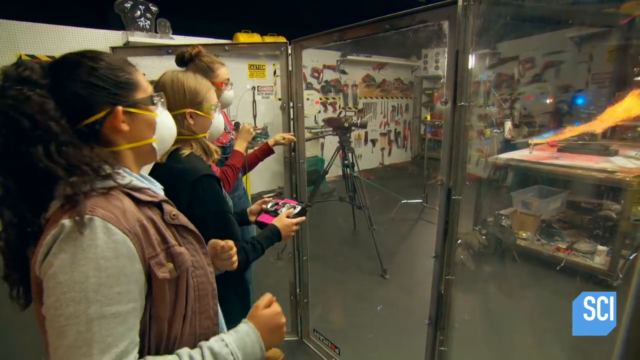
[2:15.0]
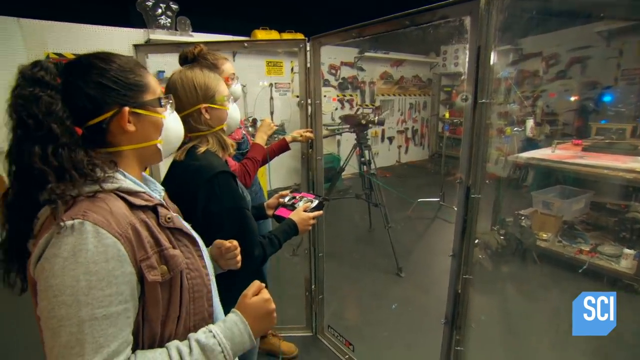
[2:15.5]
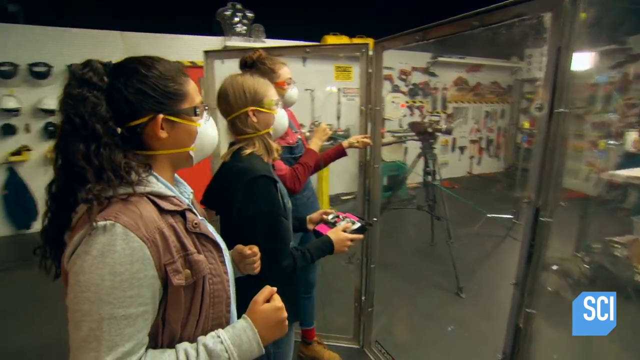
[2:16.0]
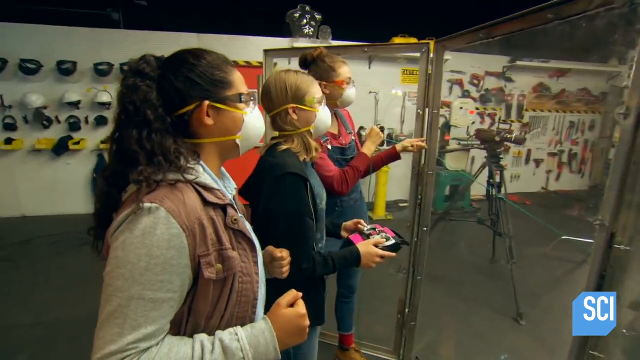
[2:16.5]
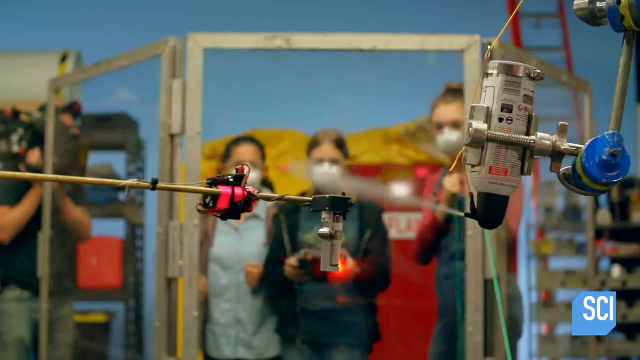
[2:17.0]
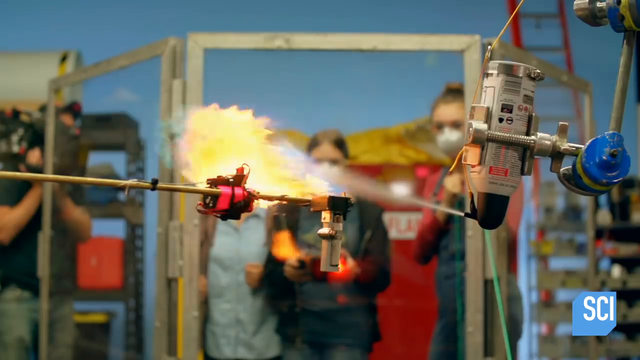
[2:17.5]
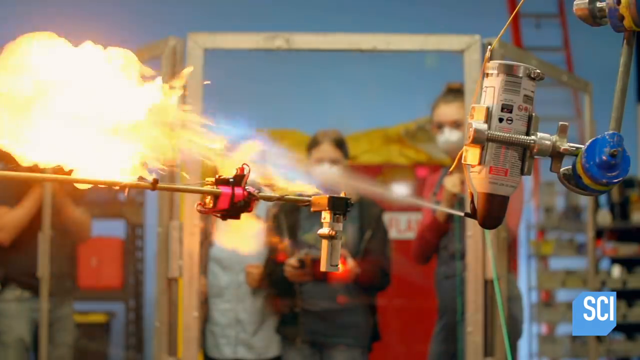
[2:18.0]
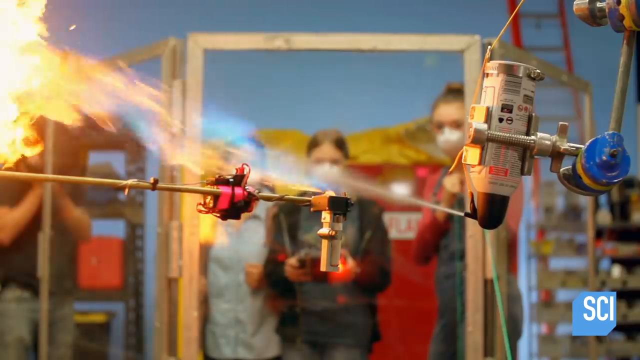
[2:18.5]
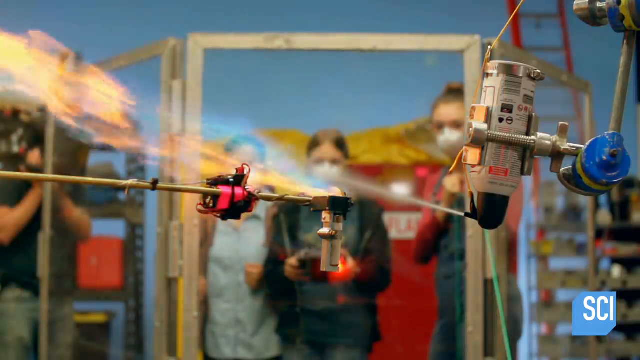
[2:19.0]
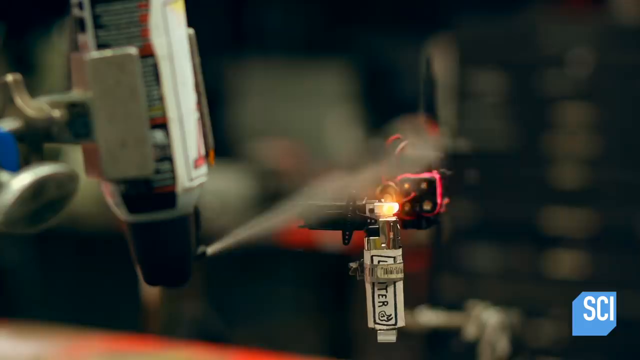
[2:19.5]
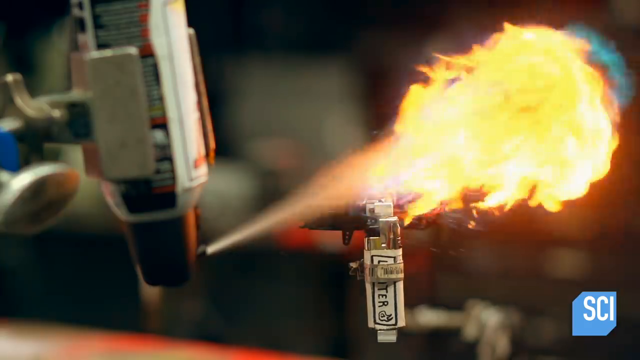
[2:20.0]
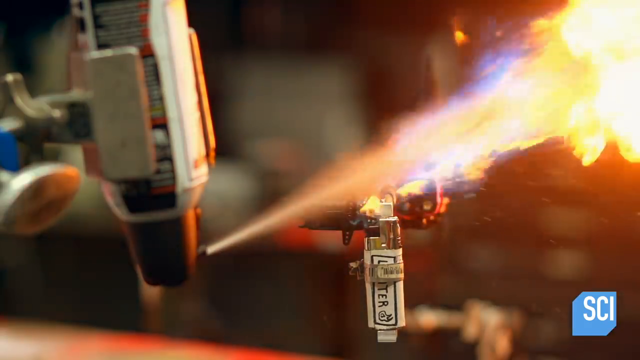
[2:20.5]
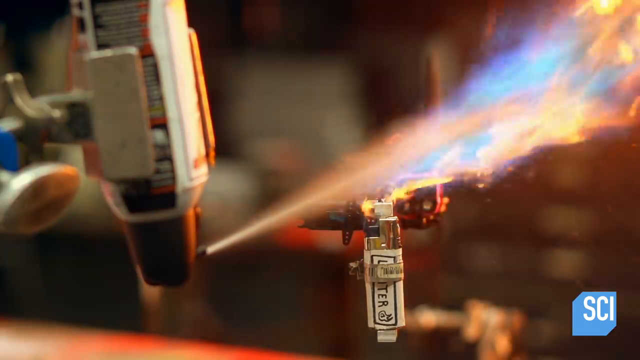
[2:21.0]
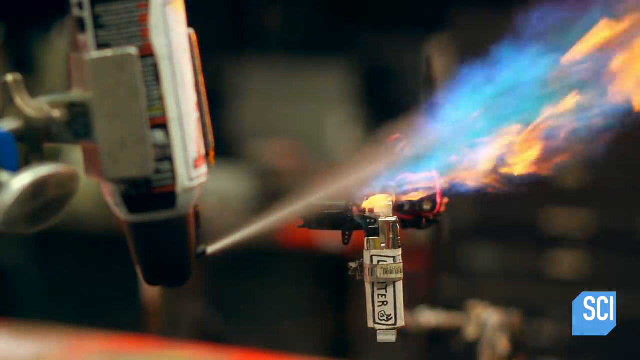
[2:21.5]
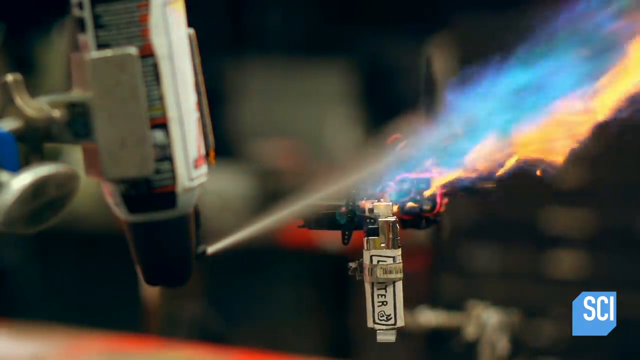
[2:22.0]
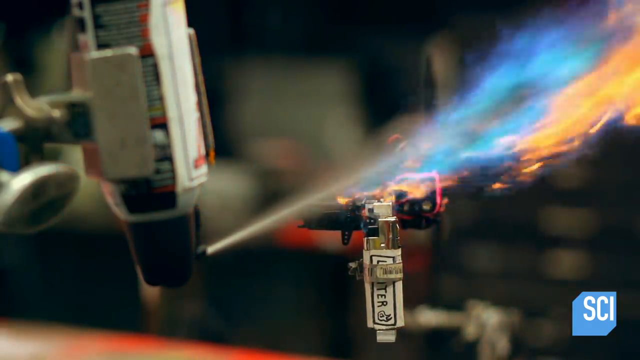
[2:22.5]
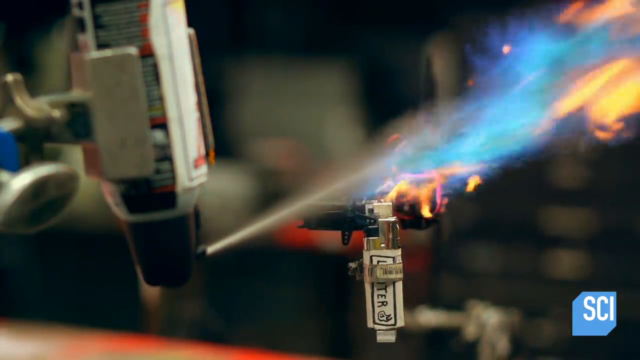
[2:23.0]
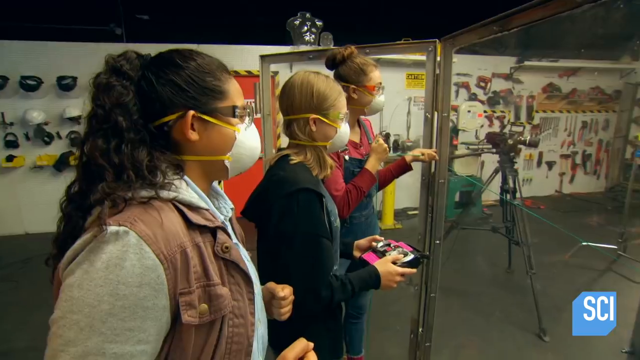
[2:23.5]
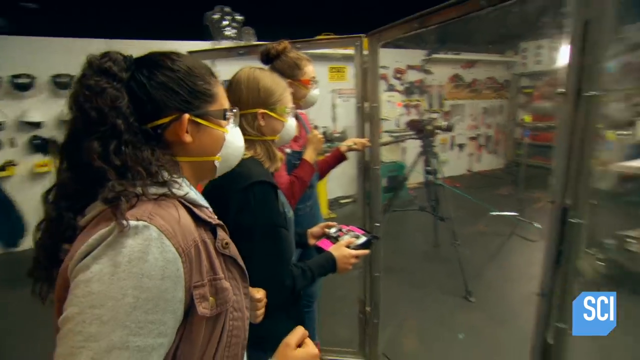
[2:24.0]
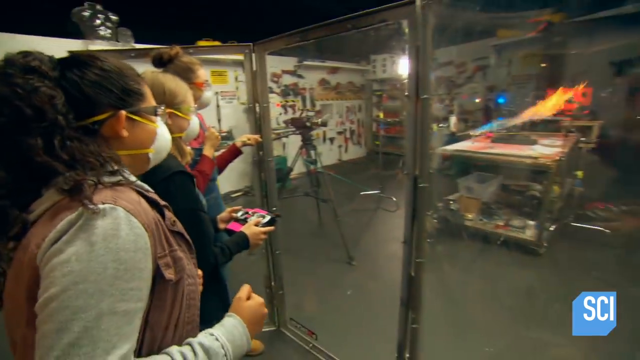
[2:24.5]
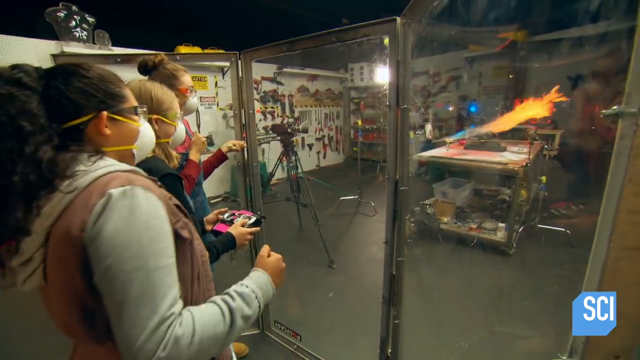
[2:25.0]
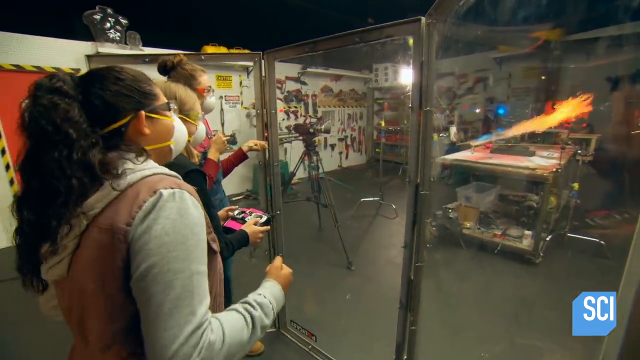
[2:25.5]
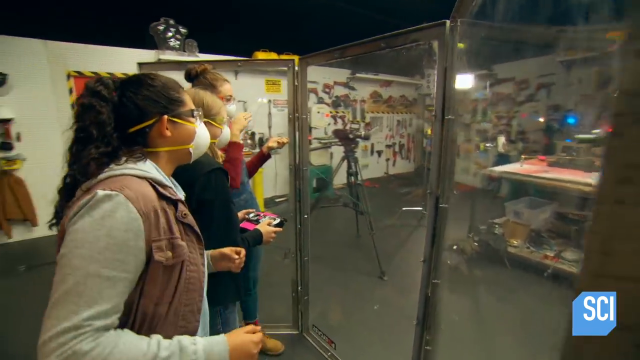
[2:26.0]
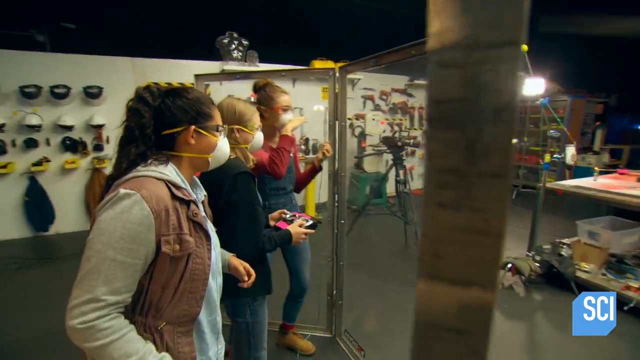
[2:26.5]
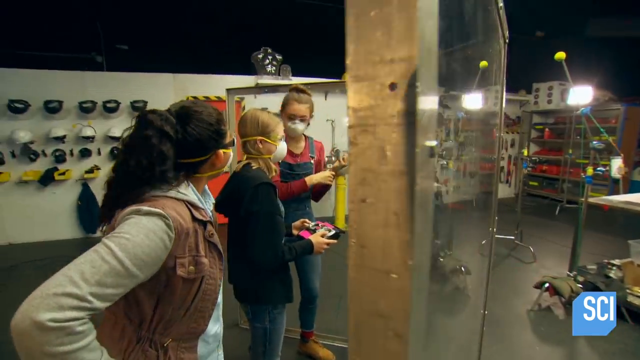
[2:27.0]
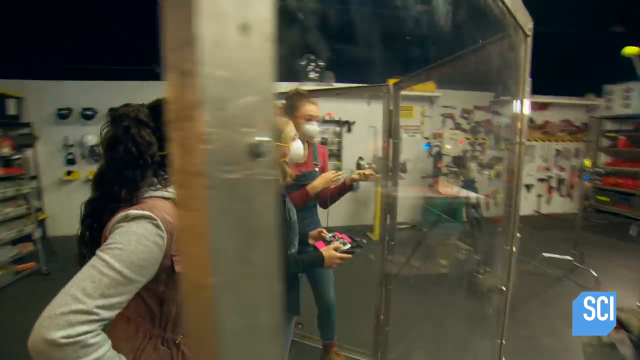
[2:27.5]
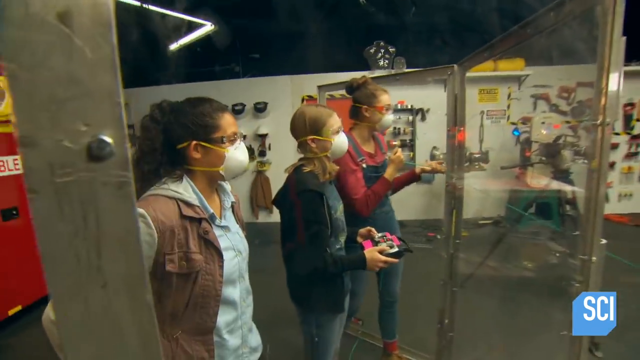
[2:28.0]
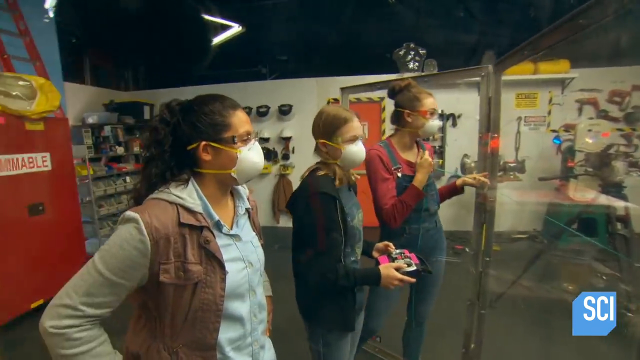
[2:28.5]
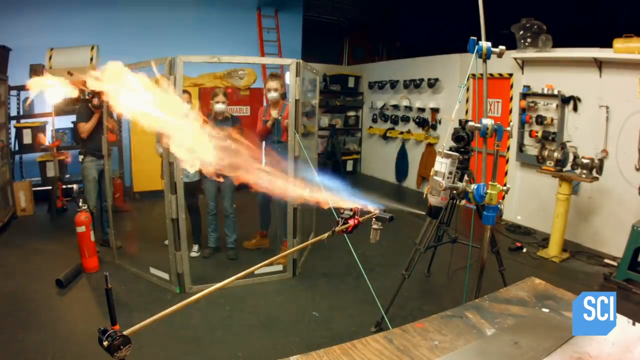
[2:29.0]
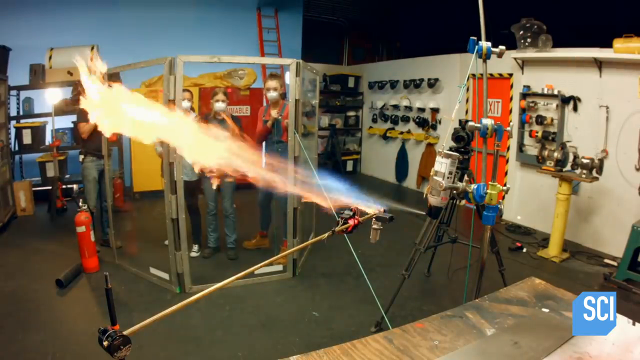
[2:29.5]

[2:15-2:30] A title reads "How flammable is compressed air by Mythbusters." Three girls stand behind clear safety glass. In the middle of the workroom, a table is set up with a bust-off can upside down, attached to a green string, and a lighter across from it. The lighter is on. The girls wear long sleeves, pants, closed-toe shoes, white masks and goggles, with their hair back for safety. When a girl pulls the string, the bust-off sprays. The girl in the middle with the game controller brings the spray and the flame together, causing a flame to come out. All of the girls react, but the girl who is describing the scene reacts the most.